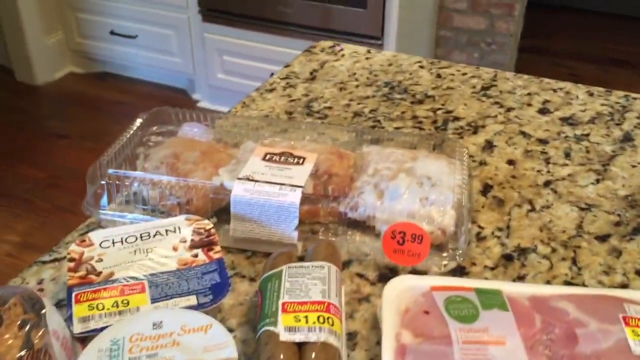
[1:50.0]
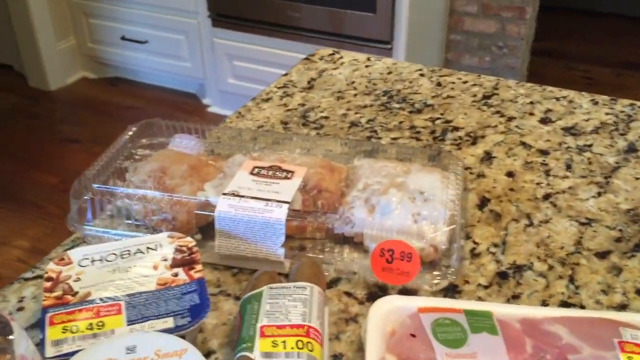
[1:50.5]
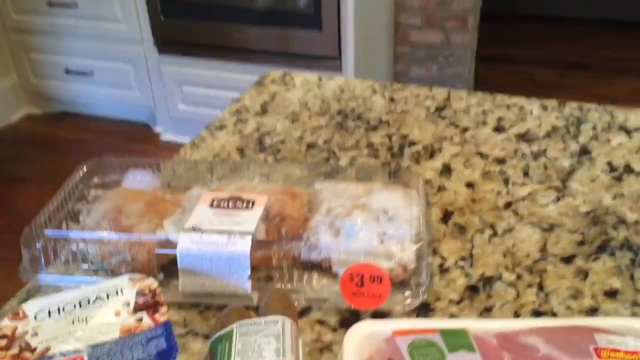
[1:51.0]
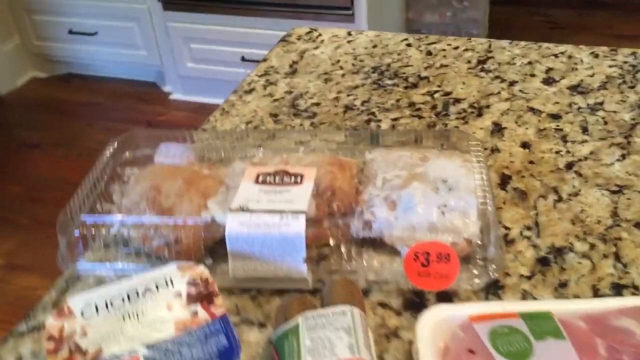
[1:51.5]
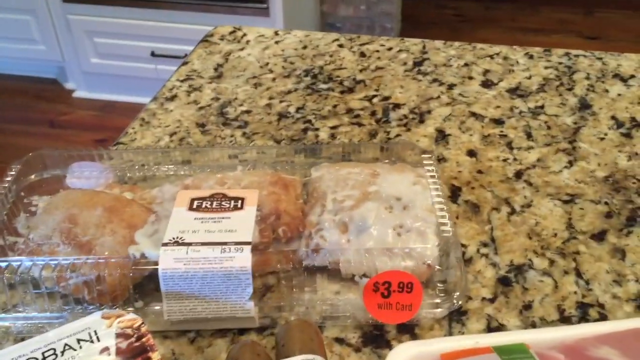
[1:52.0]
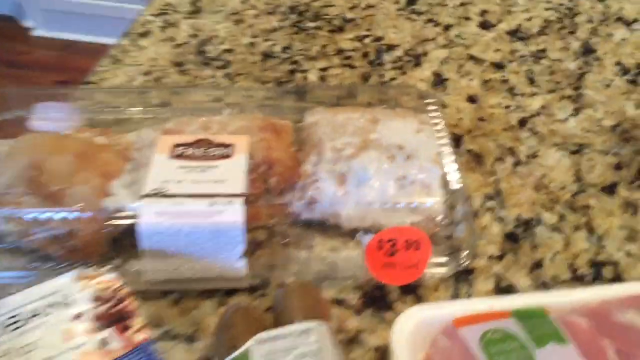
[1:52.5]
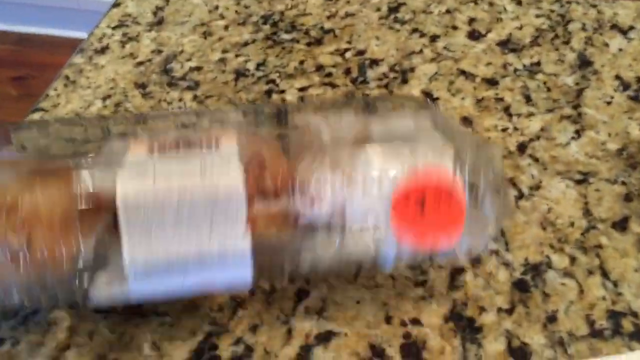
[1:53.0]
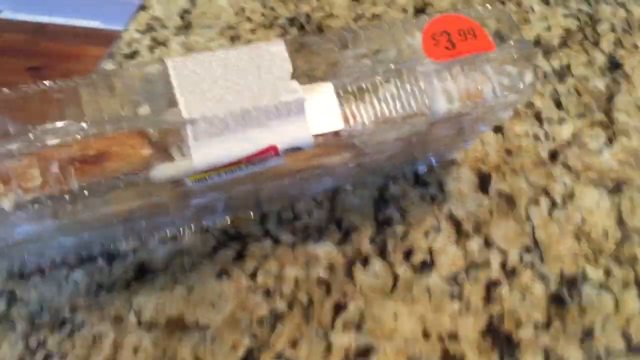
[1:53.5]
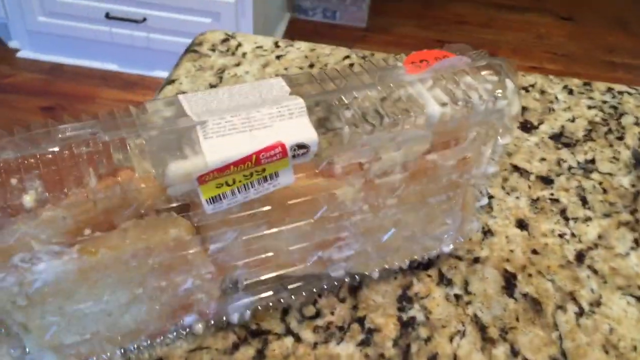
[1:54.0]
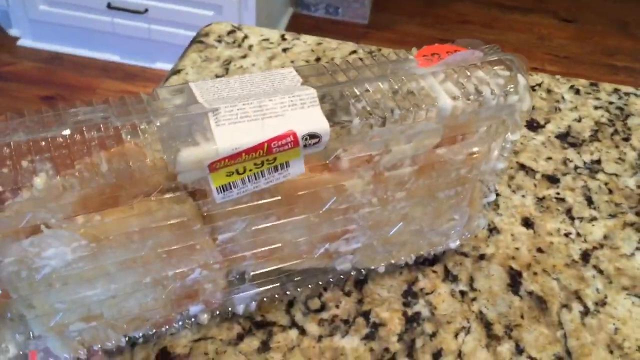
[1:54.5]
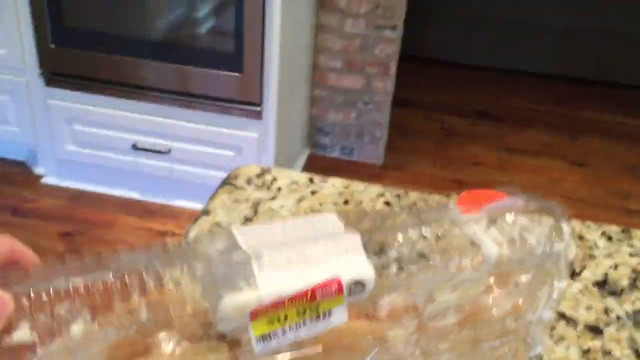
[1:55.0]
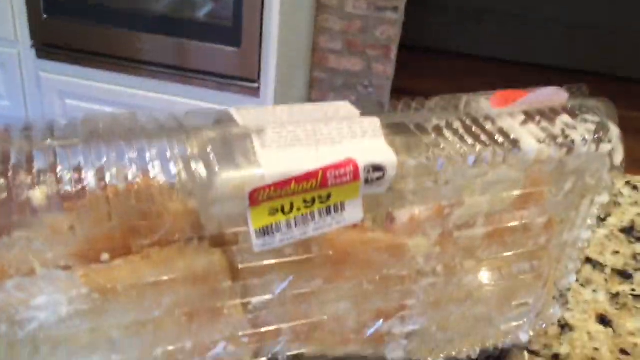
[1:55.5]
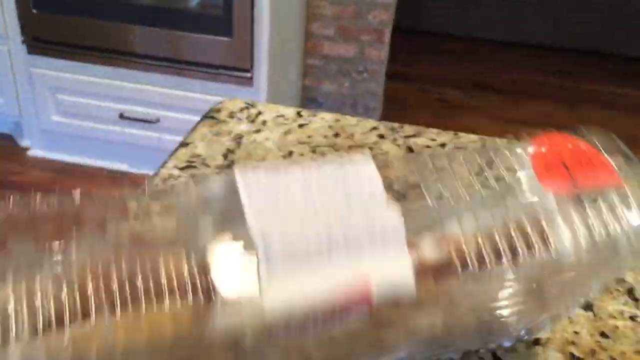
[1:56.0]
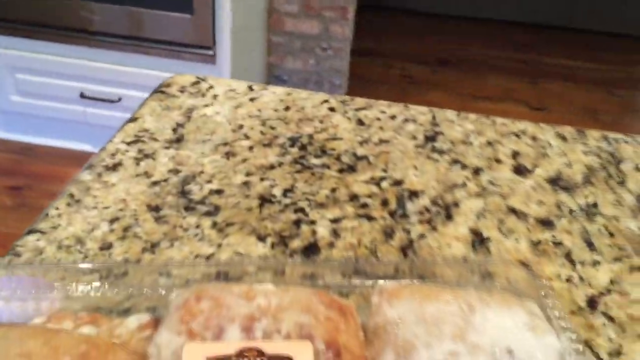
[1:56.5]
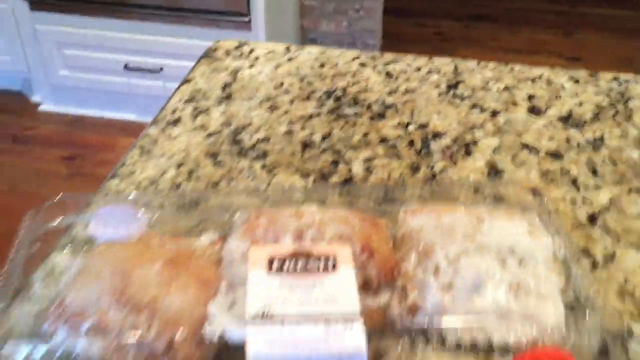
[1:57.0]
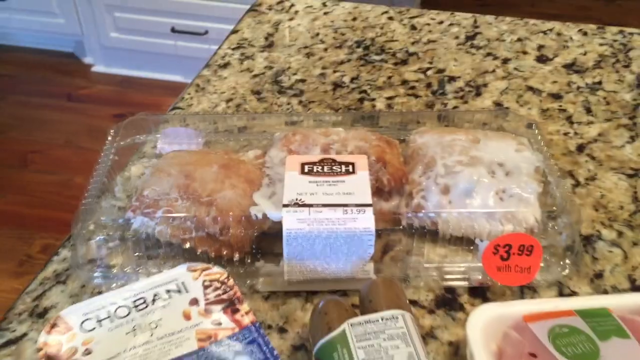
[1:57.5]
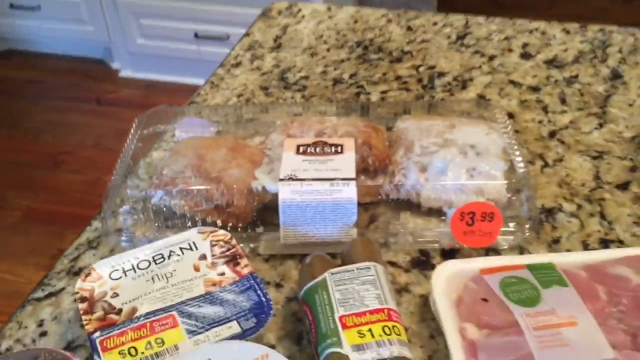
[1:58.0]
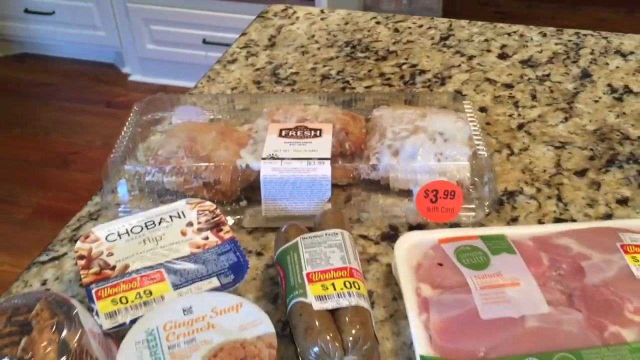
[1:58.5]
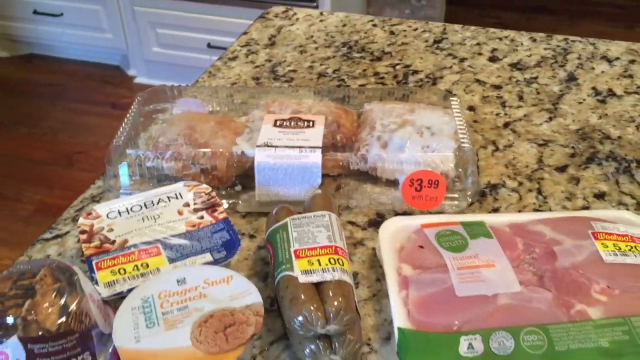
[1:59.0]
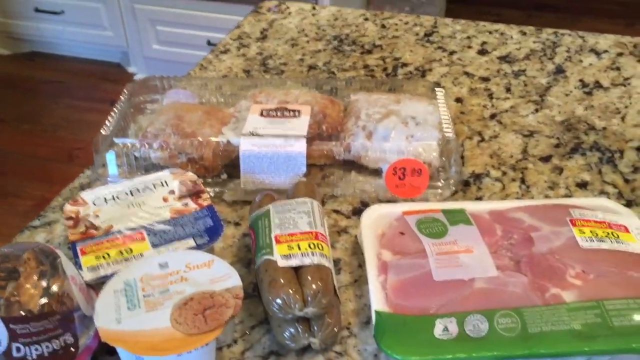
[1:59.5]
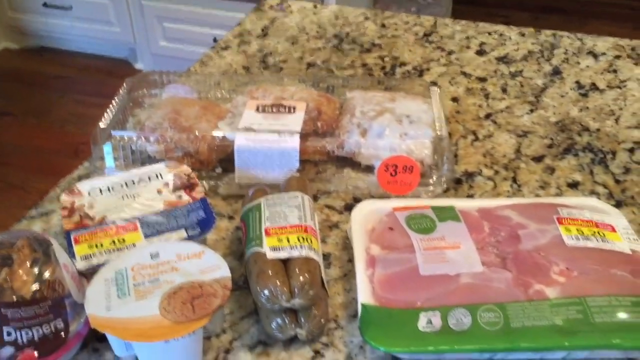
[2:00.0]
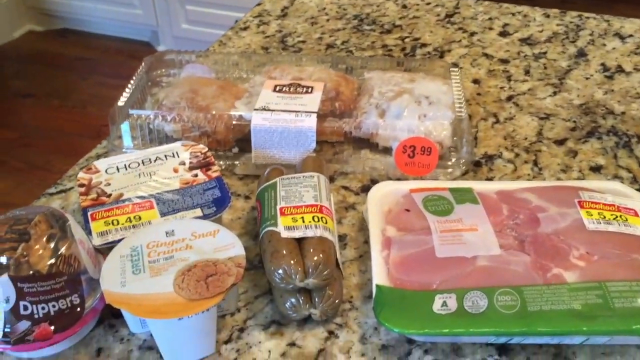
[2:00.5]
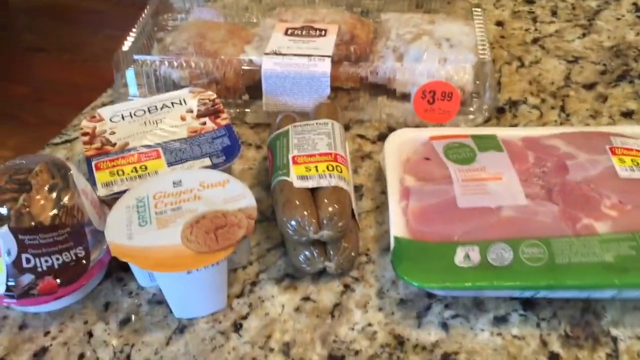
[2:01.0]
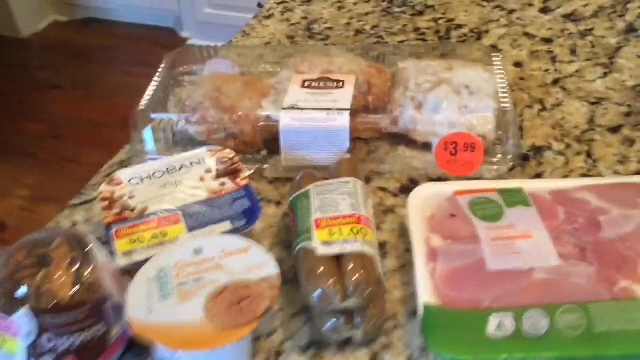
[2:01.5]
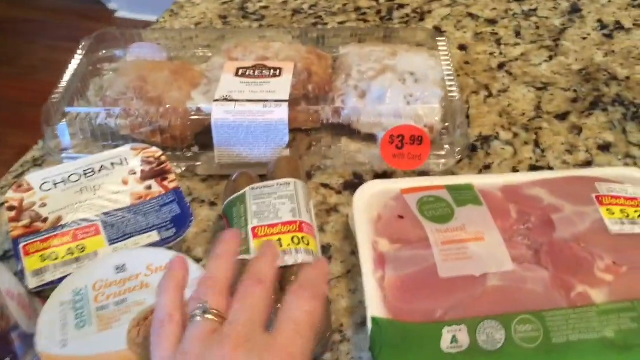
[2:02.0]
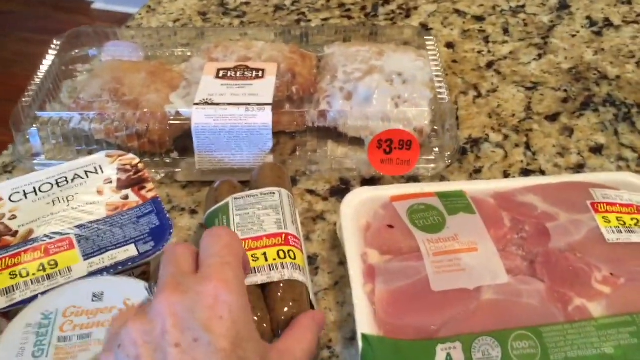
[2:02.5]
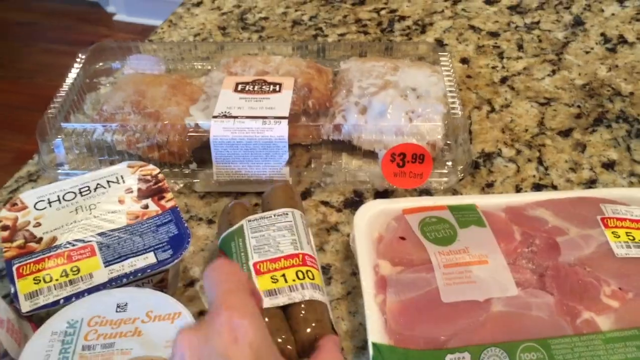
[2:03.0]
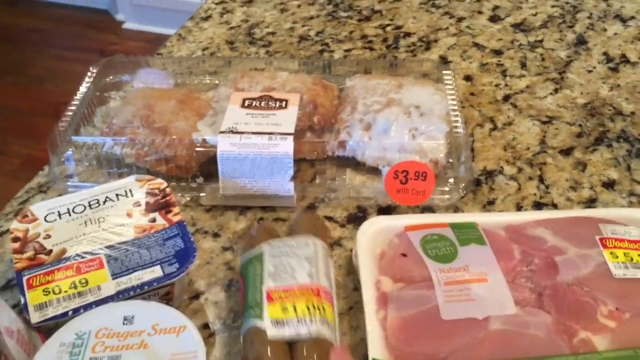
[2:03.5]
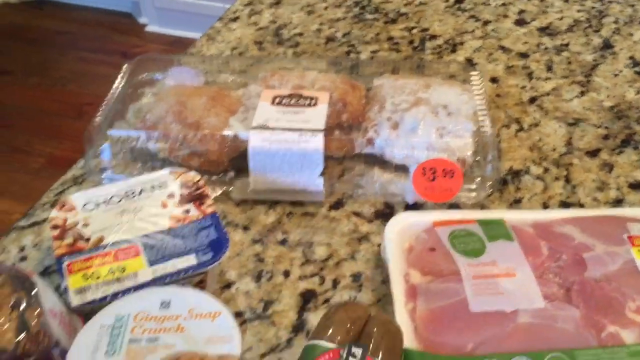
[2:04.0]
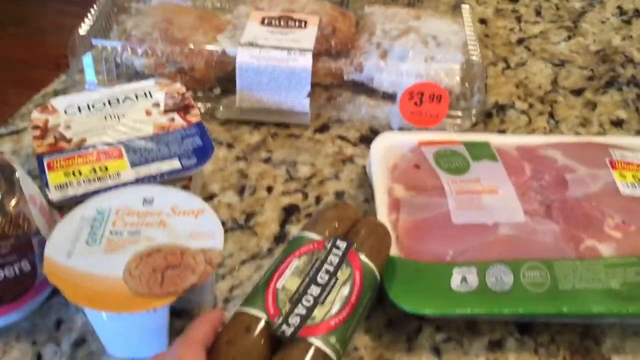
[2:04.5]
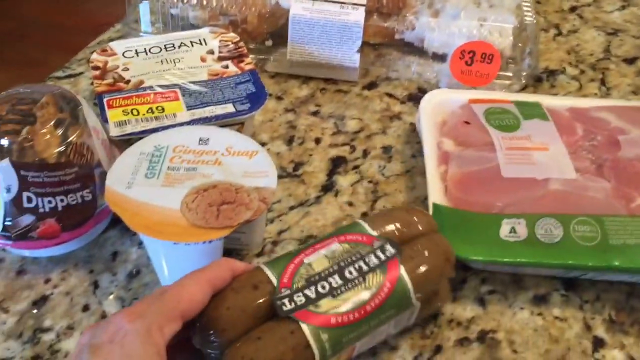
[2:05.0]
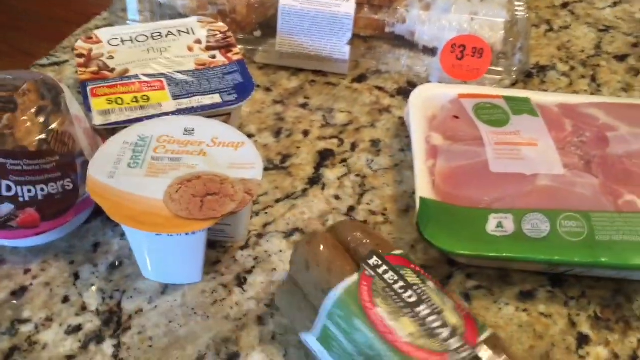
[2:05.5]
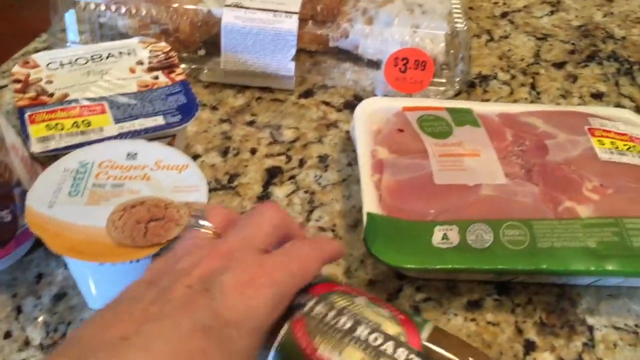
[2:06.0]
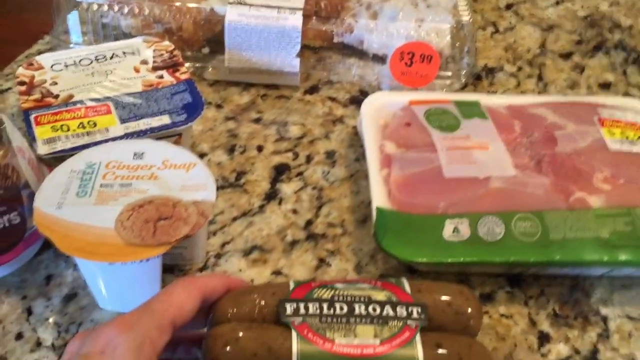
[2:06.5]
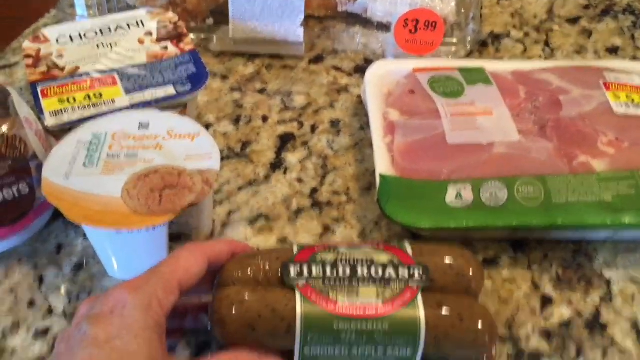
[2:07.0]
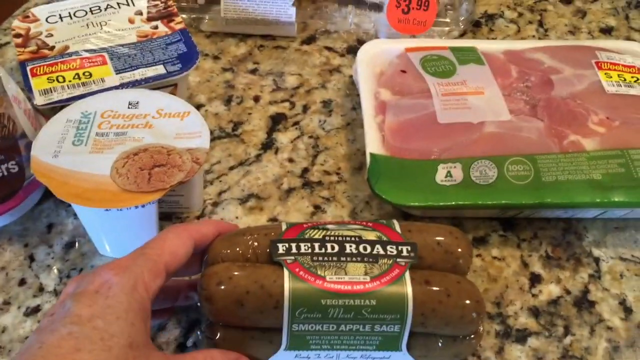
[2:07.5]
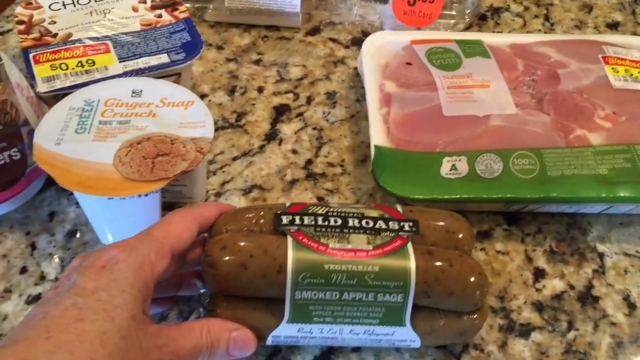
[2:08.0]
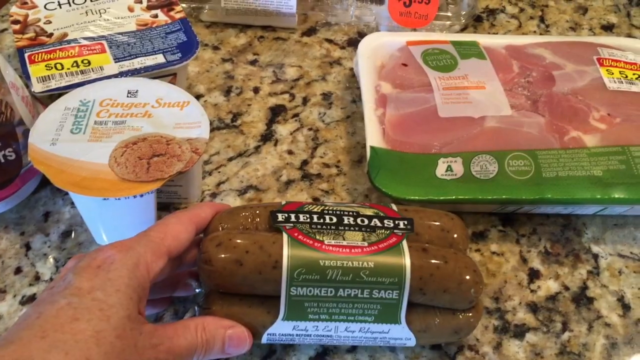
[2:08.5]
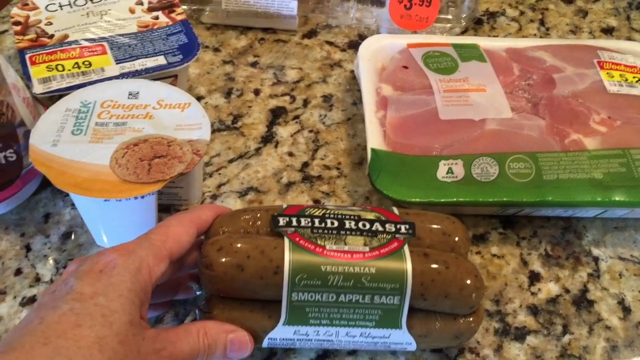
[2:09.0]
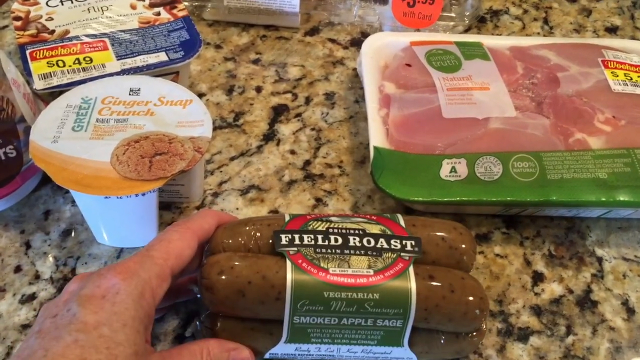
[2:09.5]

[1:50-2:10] A hand shows the items that were bought, including some frozen food and many types of food. One item is a field roast, which the person touches.